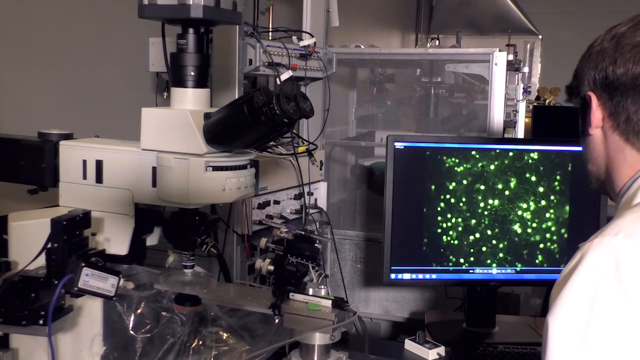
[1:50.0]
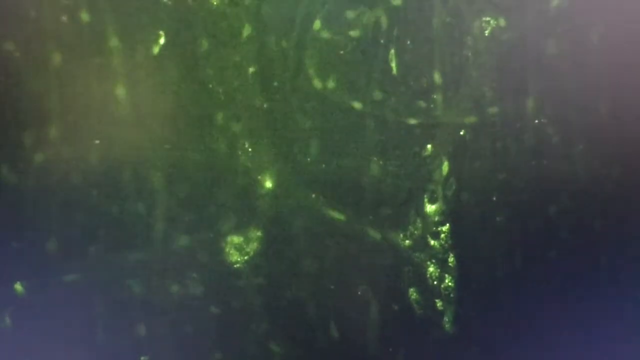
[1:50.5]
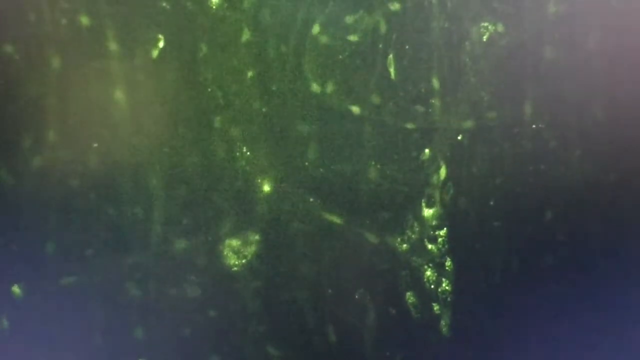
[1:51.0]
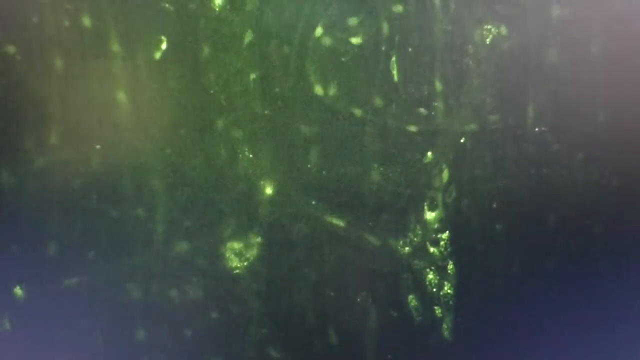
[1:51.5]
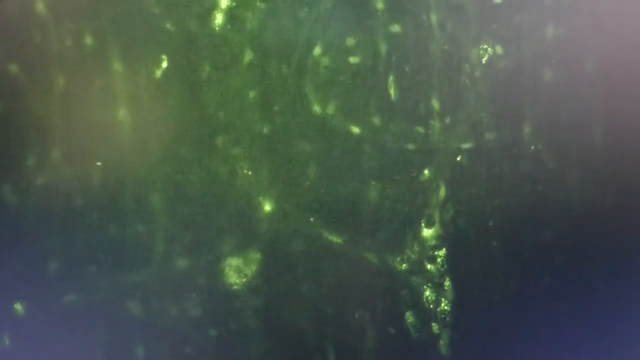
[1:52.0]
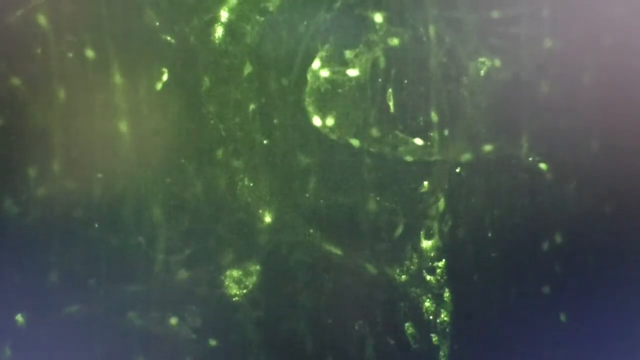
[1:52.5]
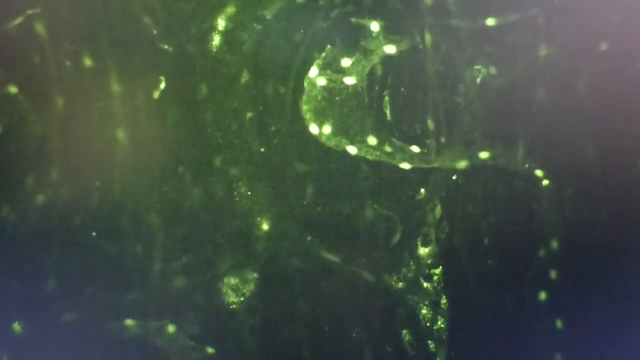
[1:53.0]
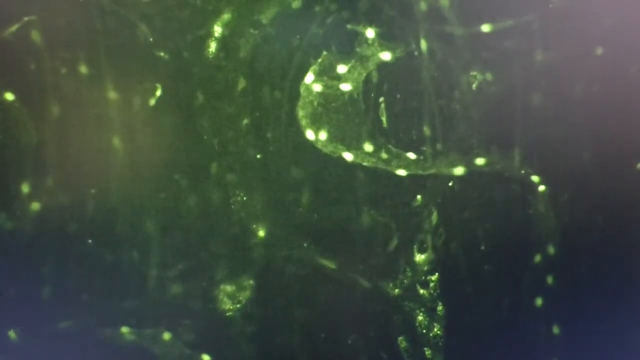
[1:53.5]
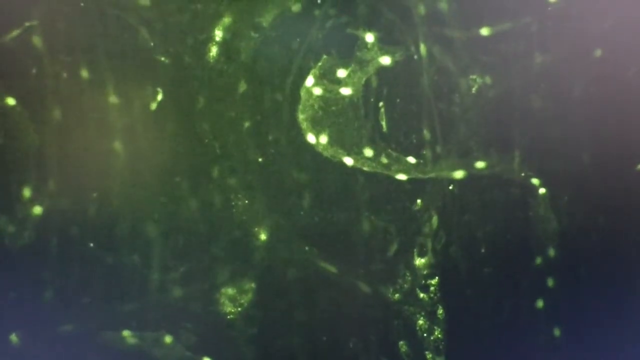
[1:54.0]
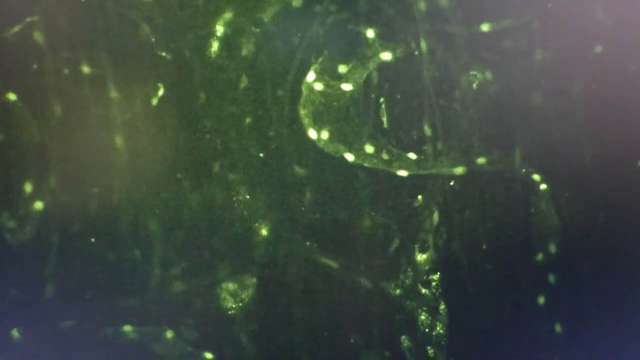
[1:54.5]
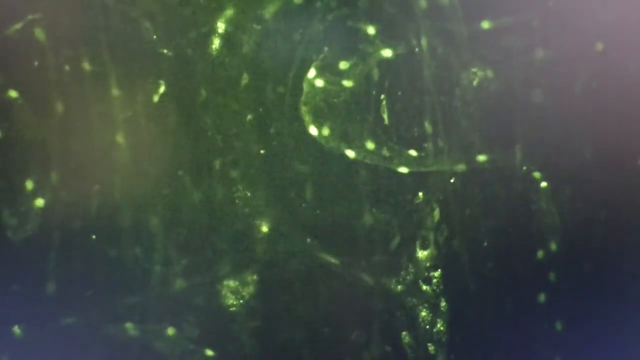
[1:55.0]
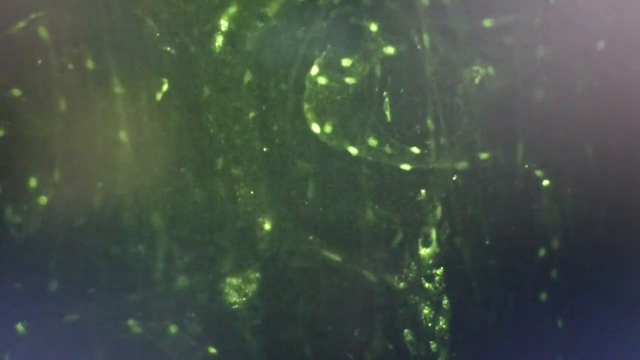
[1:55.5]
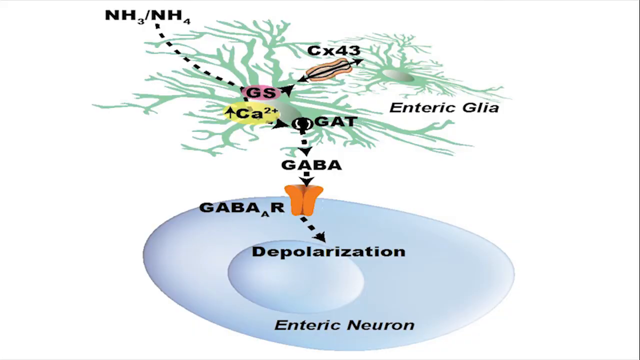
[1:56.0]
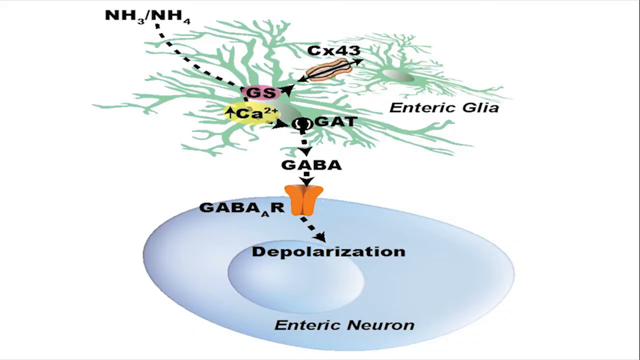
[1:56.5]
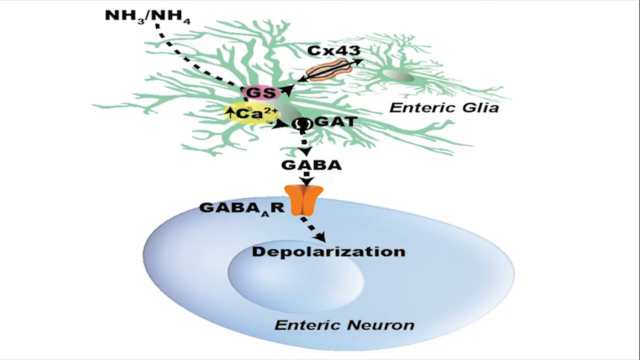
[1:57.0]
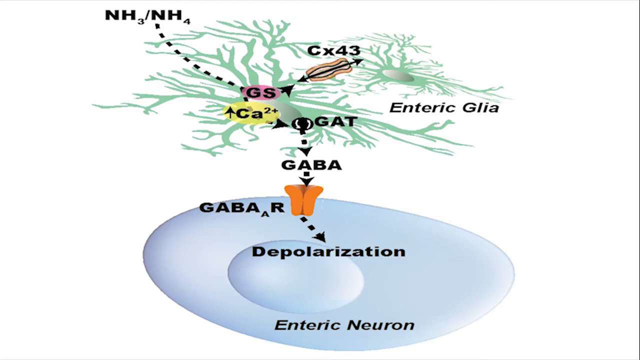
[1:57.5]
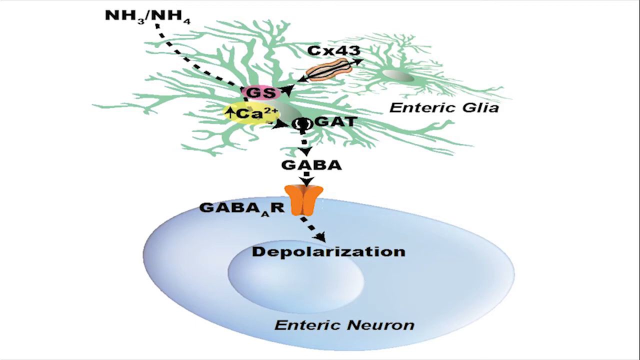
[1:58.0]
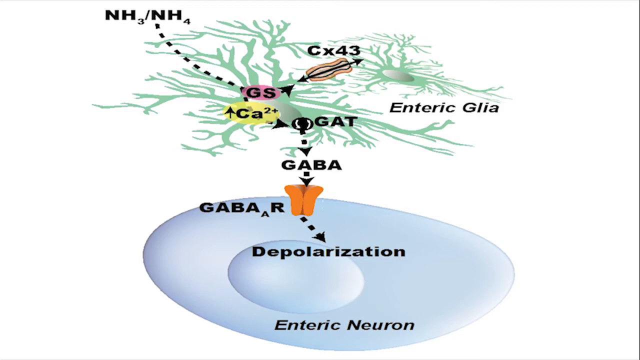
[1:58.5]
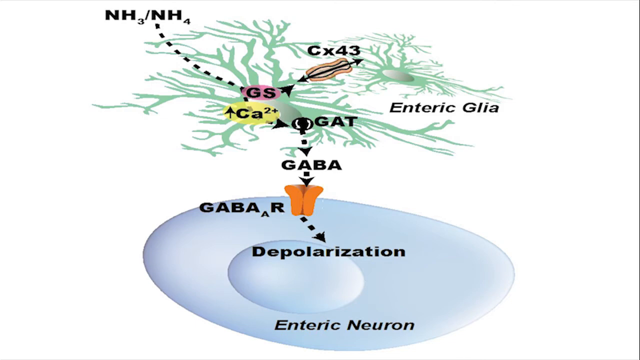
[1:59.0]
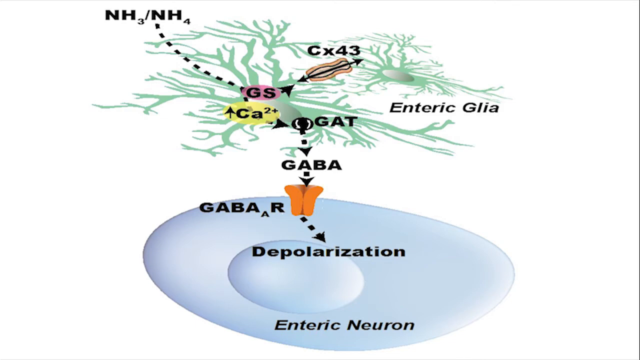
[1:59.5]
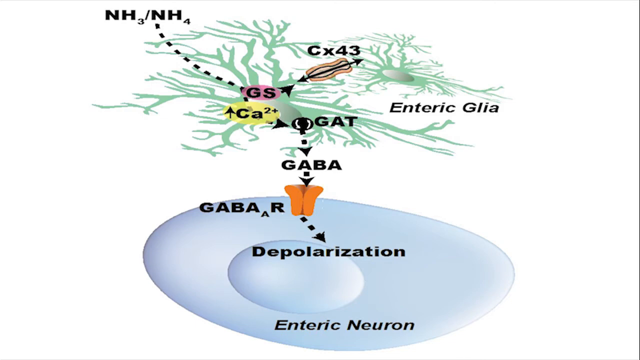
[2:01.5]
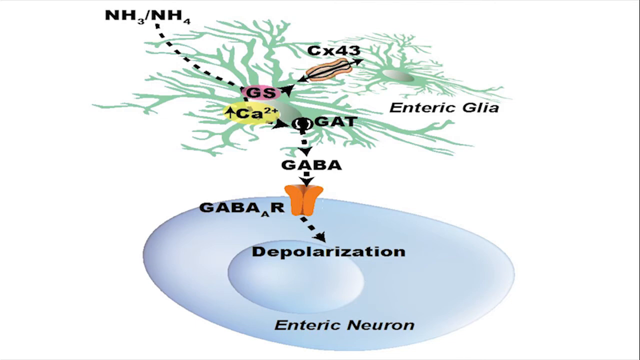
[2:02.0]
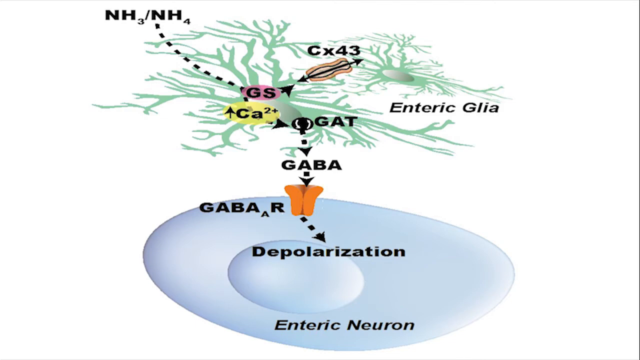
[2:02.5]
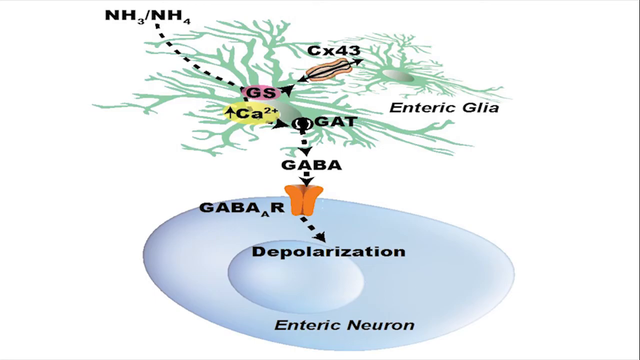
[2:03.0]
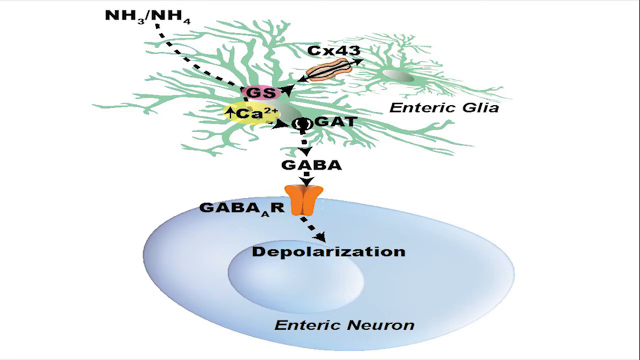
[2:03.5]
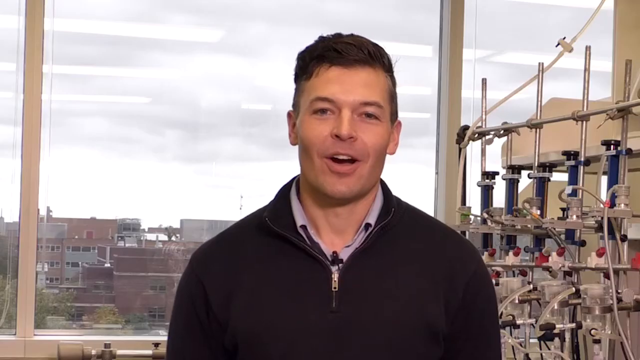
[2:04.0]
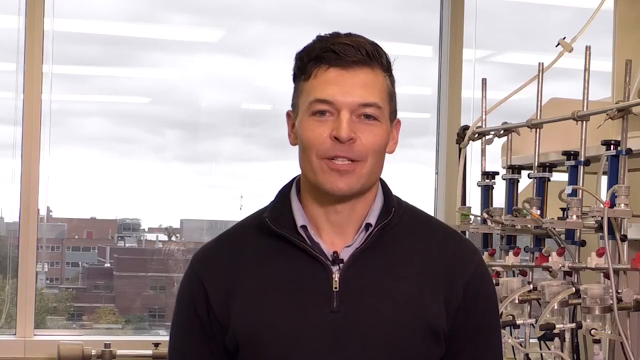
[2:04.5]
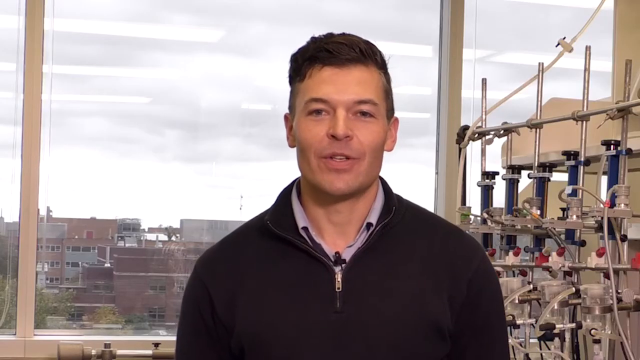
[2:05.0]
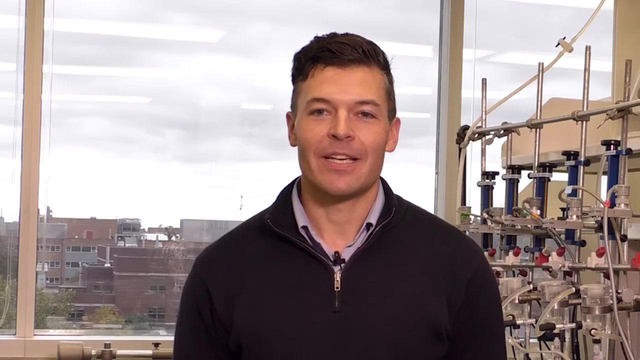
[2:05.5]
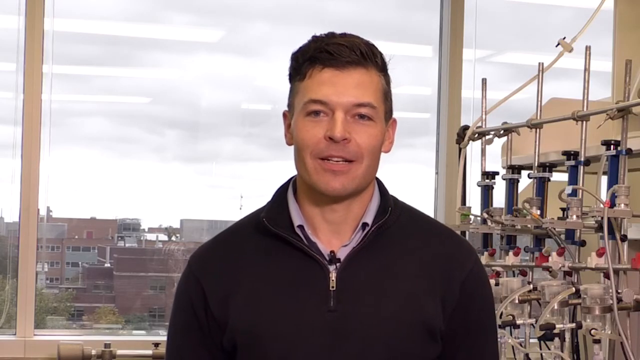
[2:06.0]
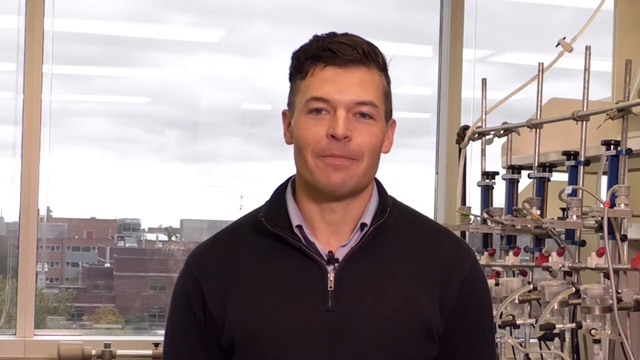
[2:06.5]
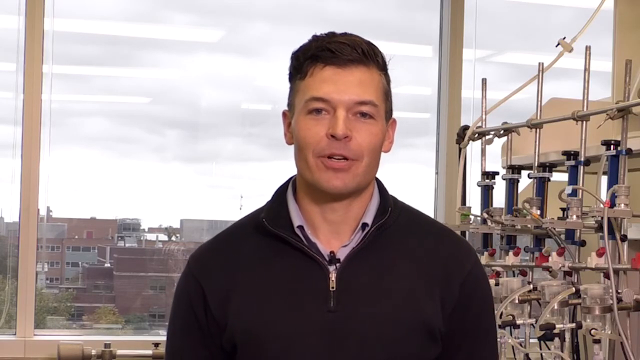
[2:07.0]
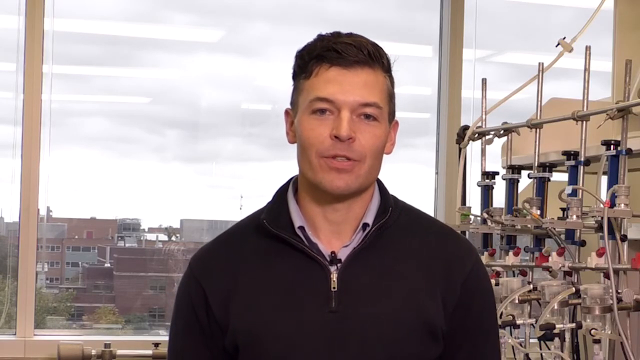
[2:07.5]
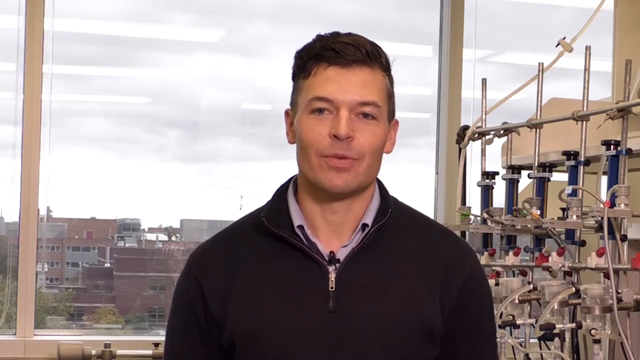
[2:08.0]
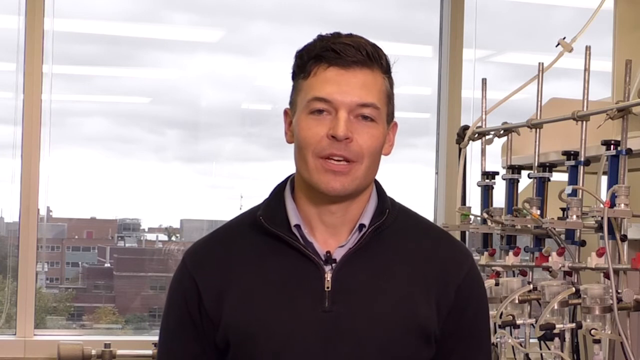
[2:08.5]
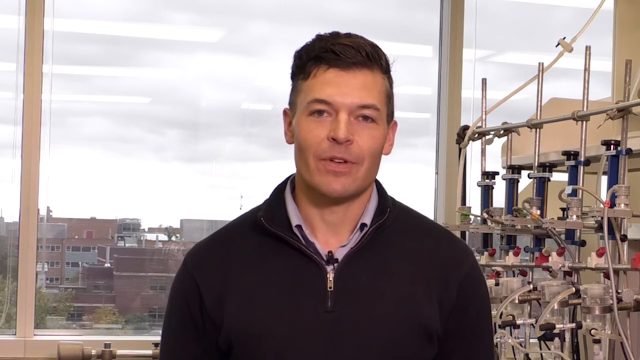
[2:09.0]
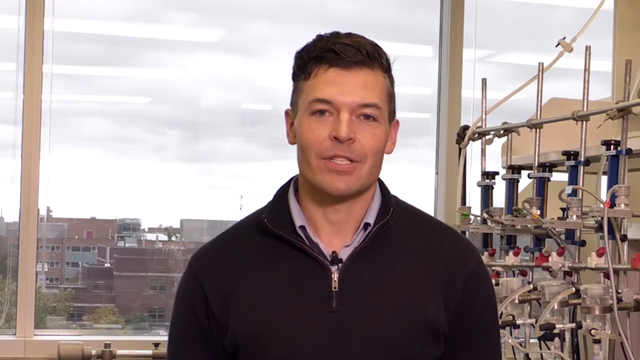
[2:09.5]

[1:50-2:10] A computer screen shows a large number of fluorescent green lights and dashes that come on and go off again. Next comes a drawing of some chemical elements, with the words "NH3-NH4" at the top of the screen, representations of GS's and CA's, and the words "enteric glia" and "depolarisation." It seems to be explaining a scientific process occurring in the enteric neuron. A man then talks to the camera. He wears a black zip-up jumper with a shirt underneath and has short black hair. He is standing next to a row of scientific equipment, and behind him a large window shows some buildings, scaffolding and the sky. He talks directly to the camera, nodding and moving his head slightly as he speaks.